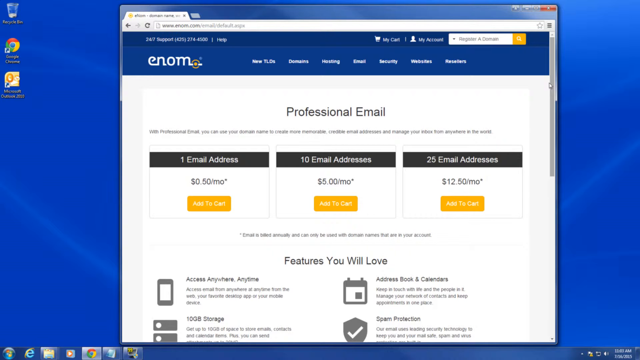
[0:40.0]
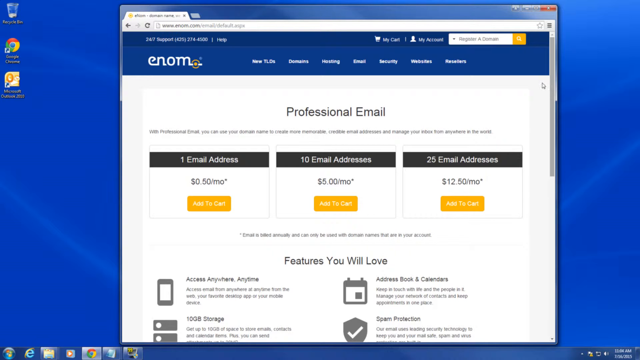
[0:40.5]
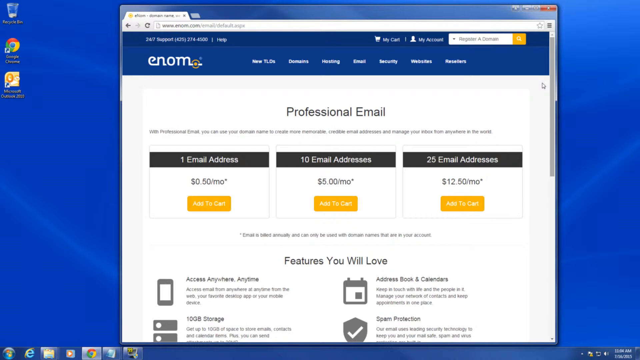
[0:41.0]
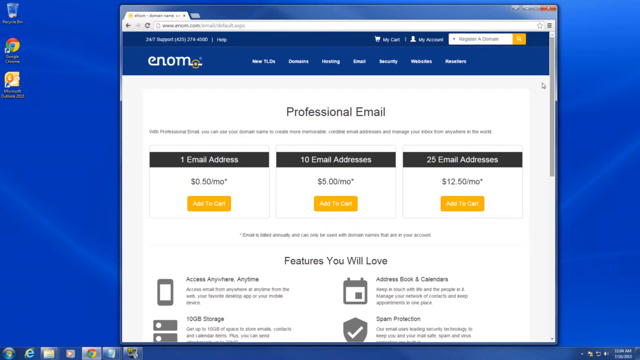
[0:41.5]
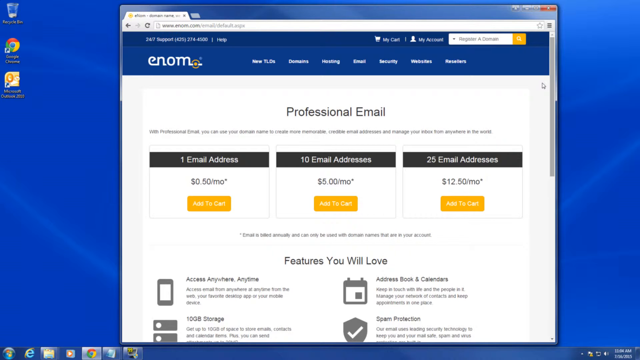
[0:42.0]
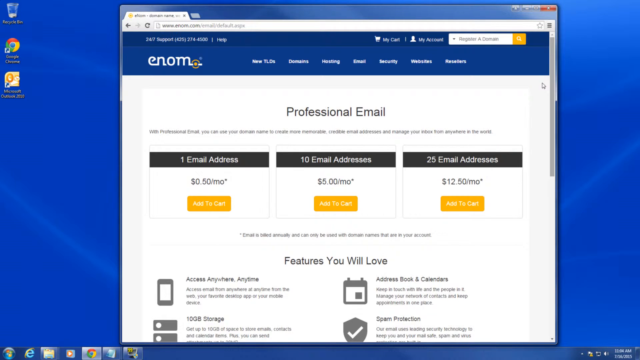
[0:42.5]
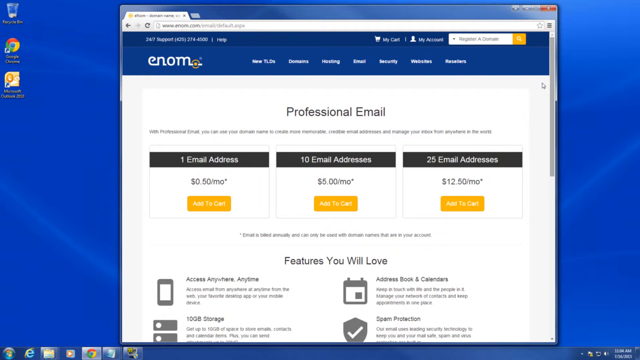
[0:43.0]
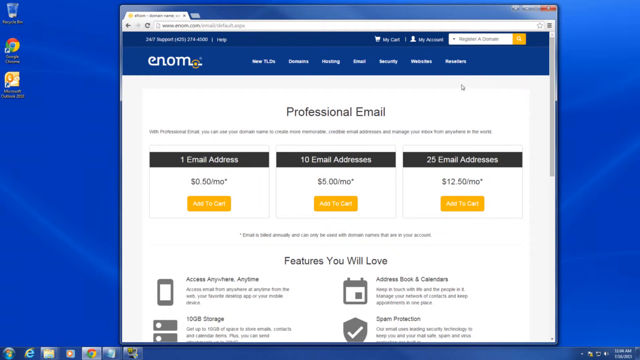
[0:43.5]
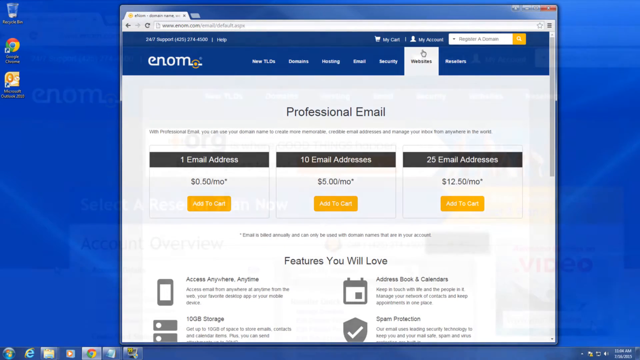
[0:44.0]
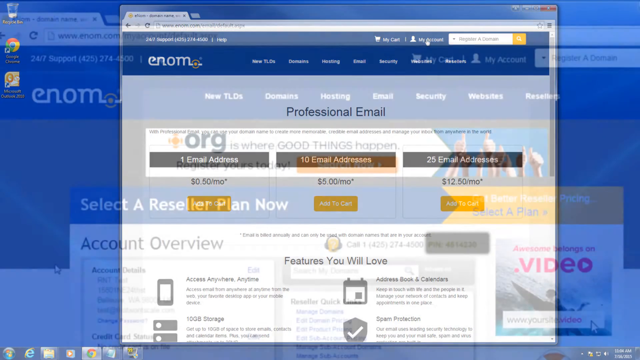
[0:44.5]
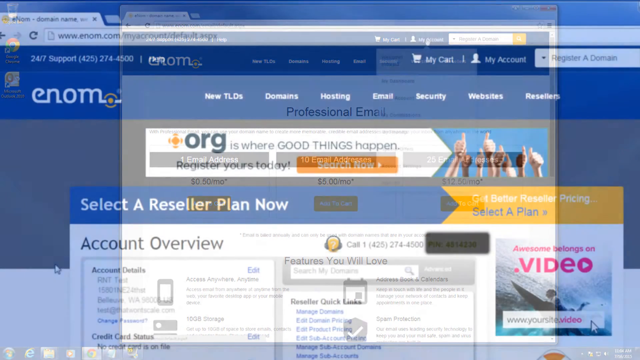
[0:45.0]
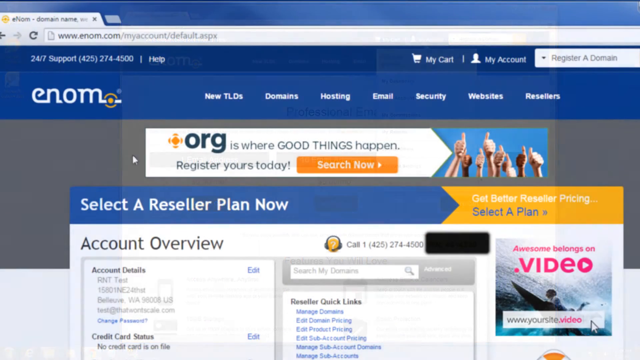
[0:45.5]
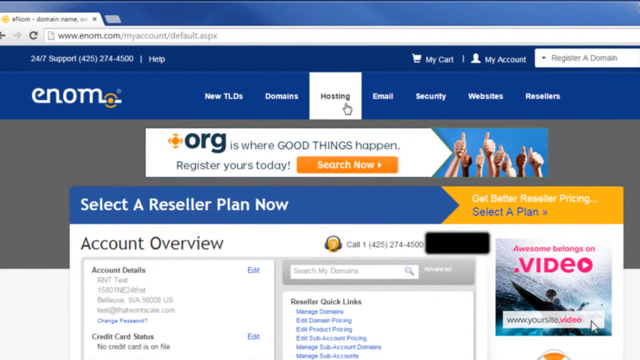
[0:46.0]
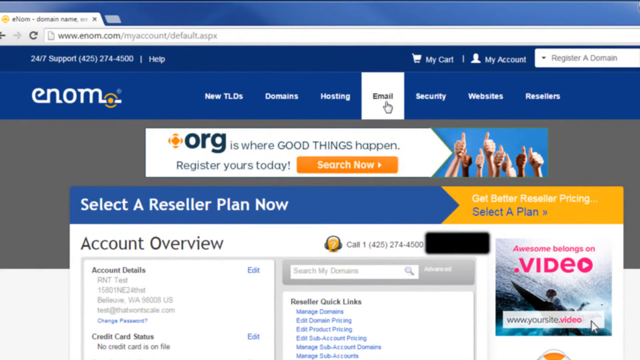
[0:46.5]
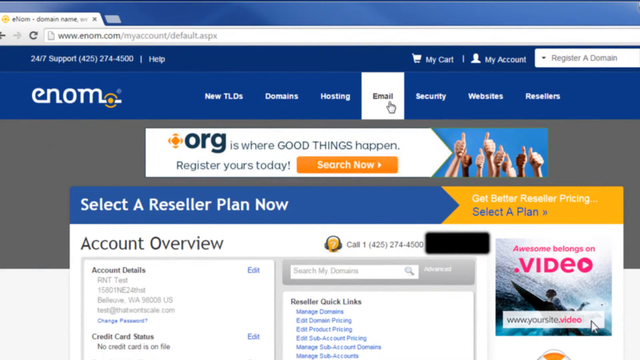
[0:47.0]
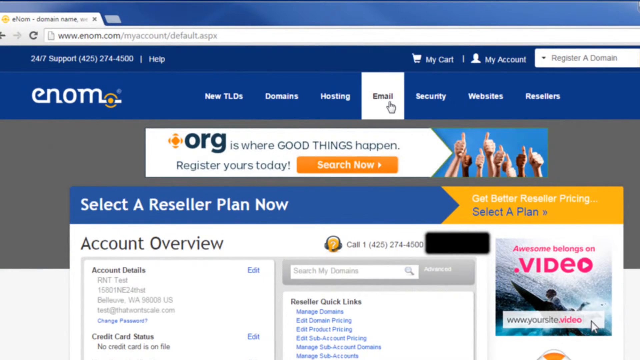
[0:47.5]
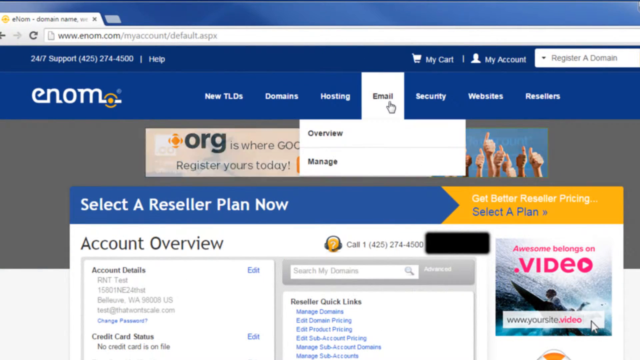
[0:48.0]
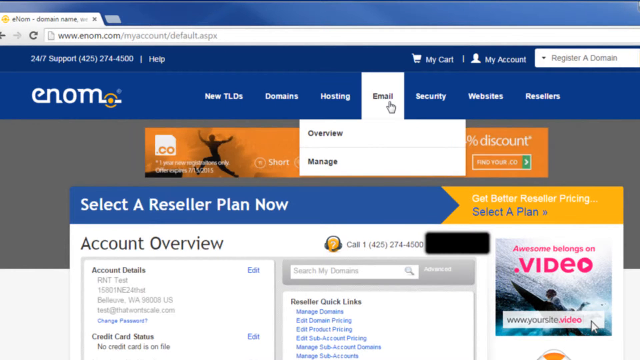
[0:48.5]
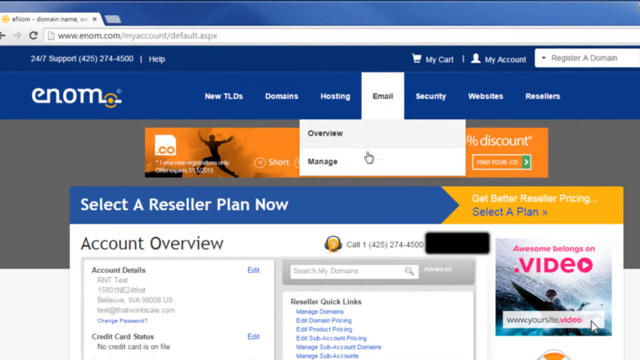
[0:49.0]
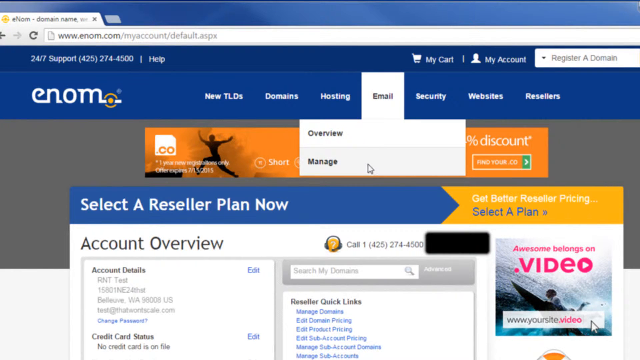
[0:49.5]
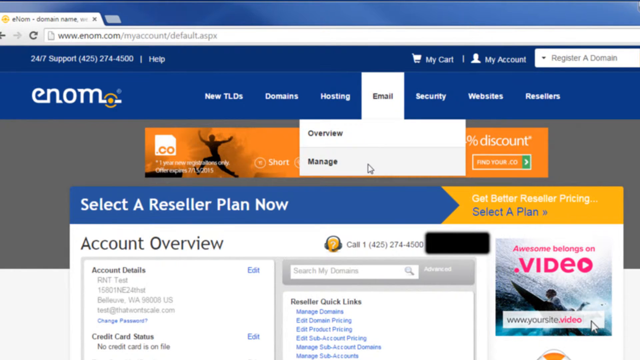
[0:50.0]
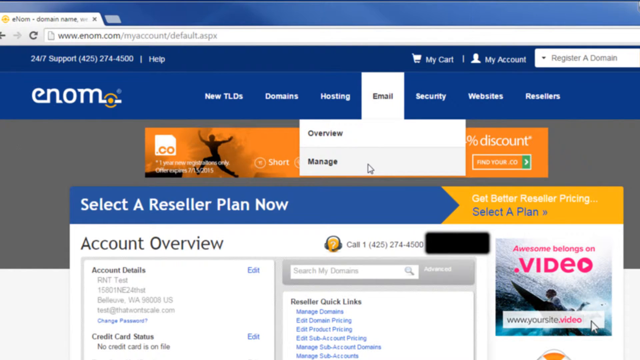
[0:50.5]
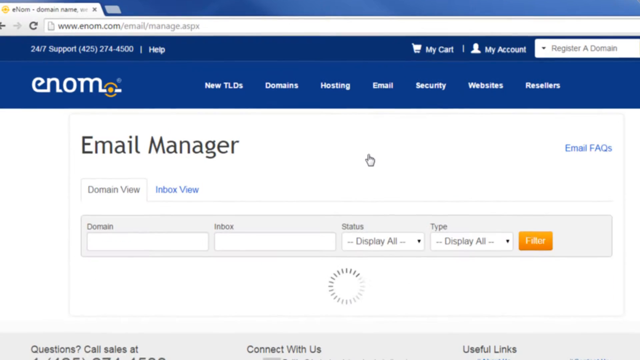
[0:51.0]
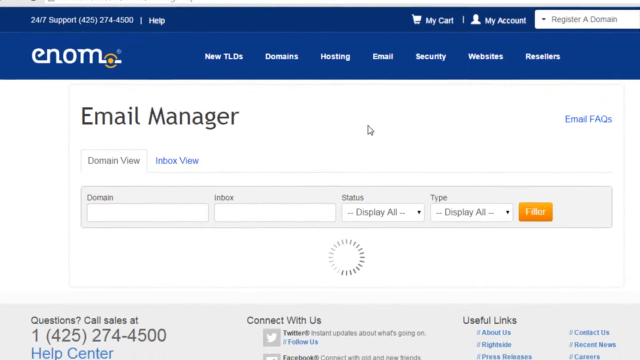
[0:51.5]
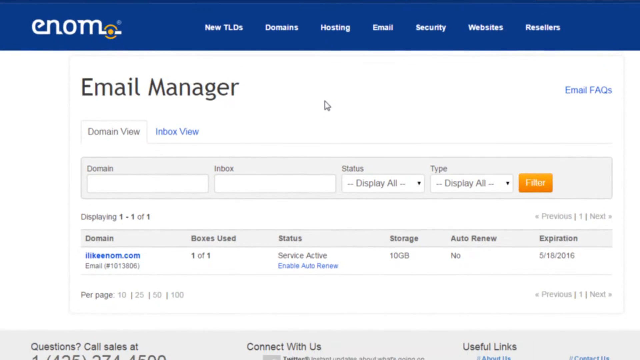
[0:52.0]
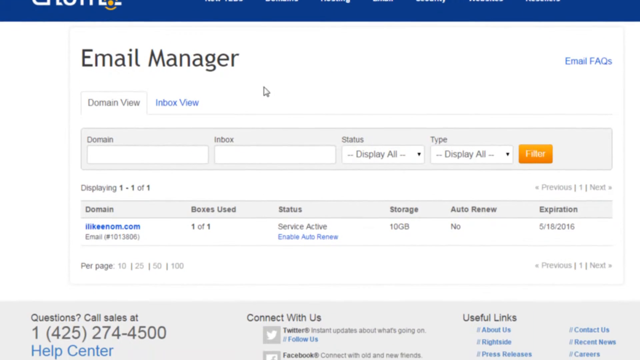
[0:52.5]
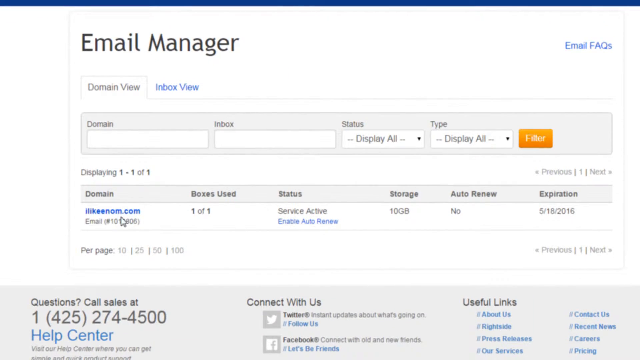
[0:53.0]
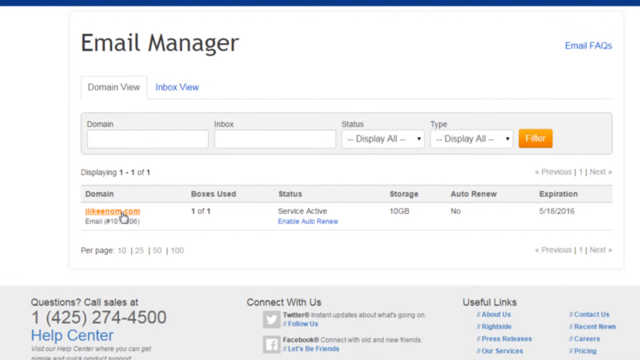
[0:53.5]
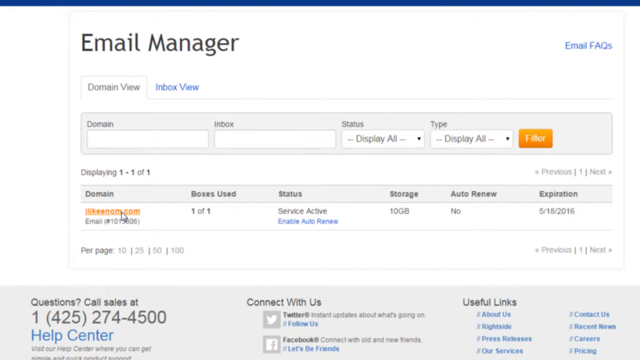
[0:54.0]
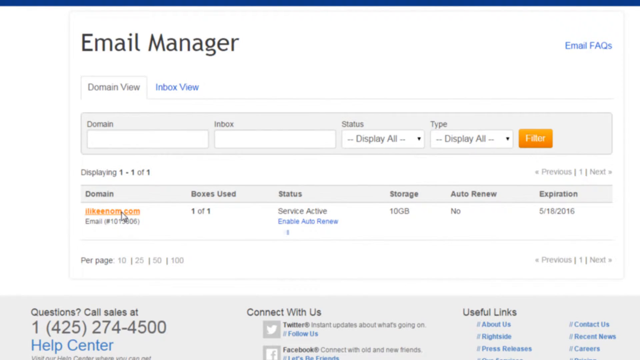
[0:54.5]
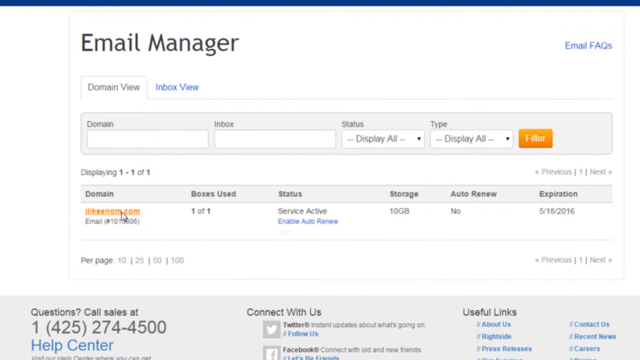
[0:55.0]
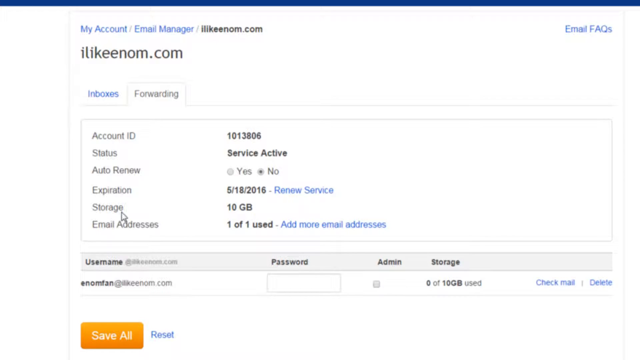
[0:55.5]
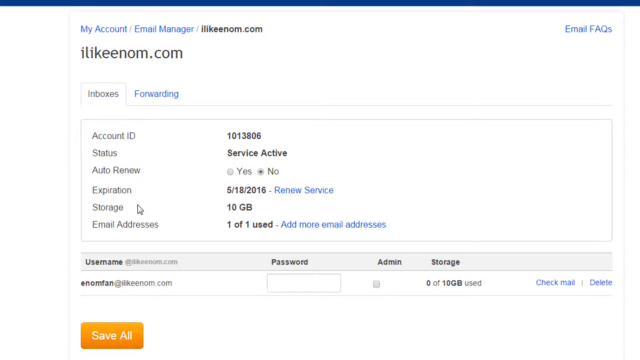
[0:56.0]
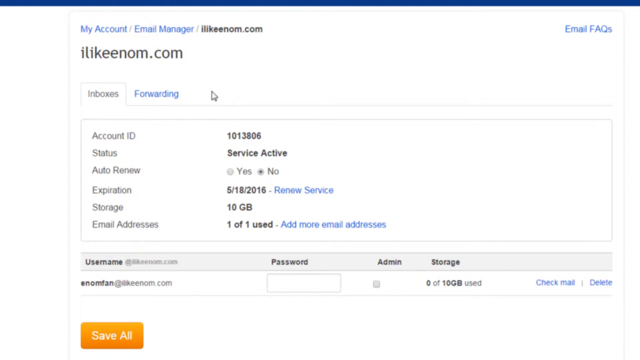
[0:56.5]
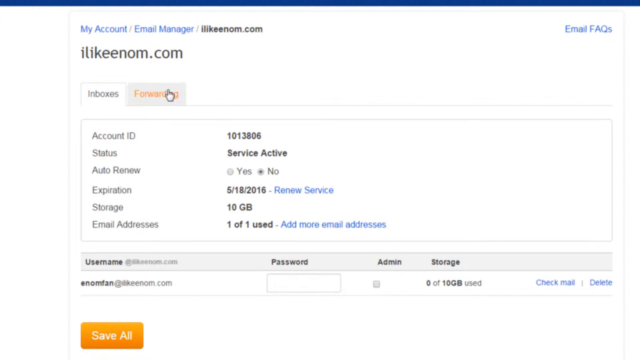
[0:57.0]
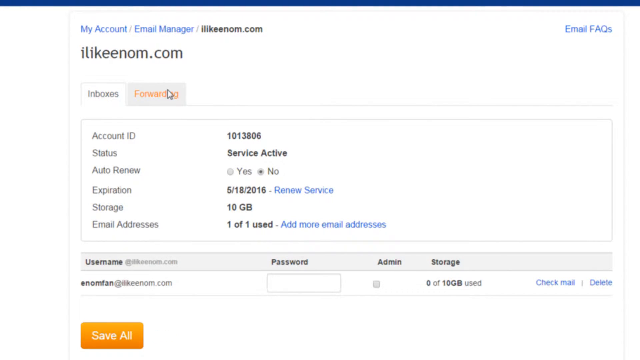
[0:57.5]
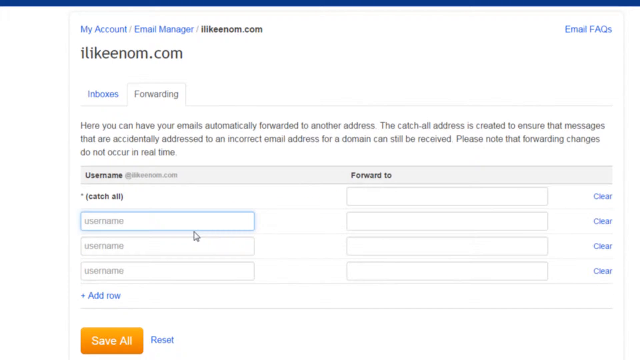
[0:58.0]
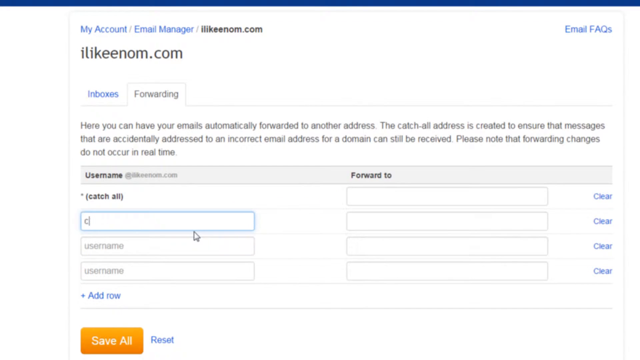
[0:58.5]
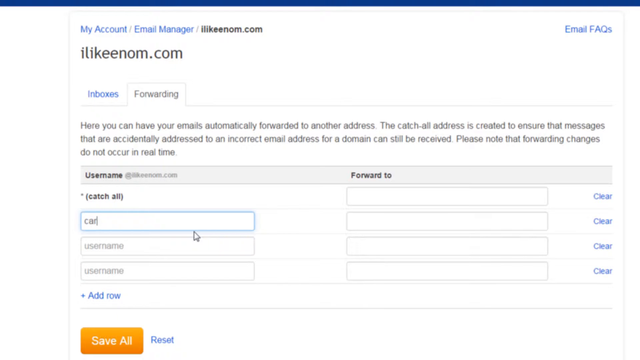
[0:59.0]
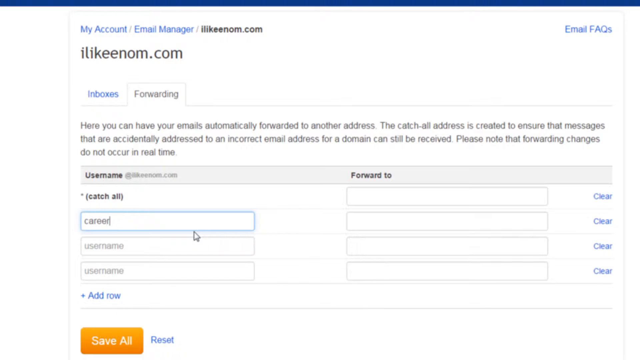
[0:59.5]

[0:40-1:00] A computer screen with a blue background shows the Enom website pulled up, with different options listed beside the name. Below it, a white screen says "Professional Email," with options listed underneath, each with a price and a yellow box reading "Add to cart." Someone uses a white arrow pointer to click on the different options on the site; the pointer turns into a hand as the user goes over the options. They then go to a different screen that says "email manager," with options that can be filled out or clicked on. One of them appears to be clicked, showing an example of how to fill out the page.